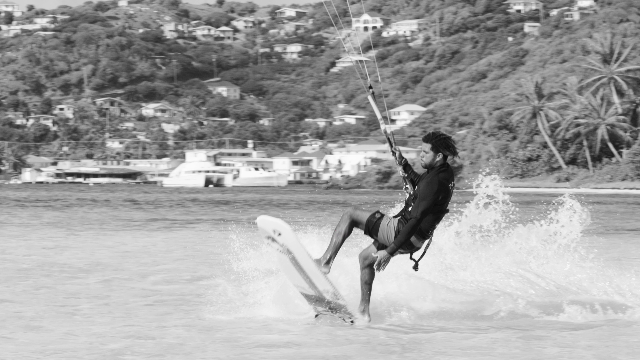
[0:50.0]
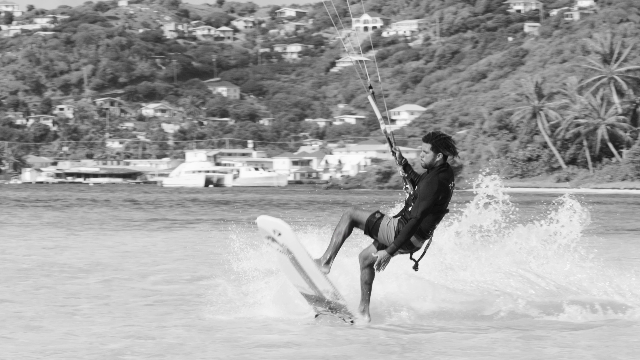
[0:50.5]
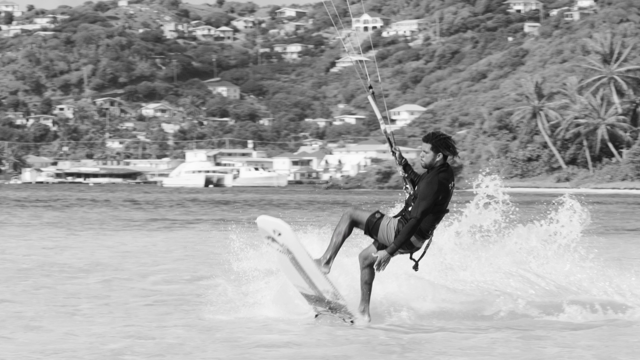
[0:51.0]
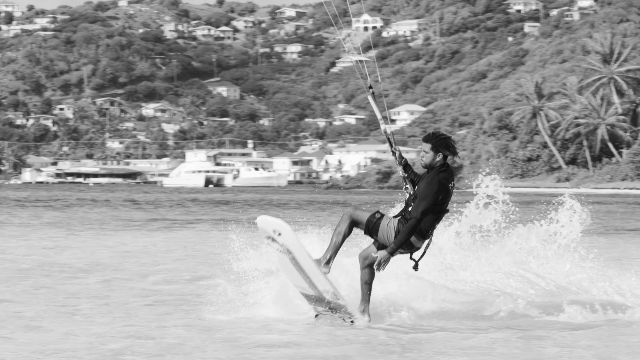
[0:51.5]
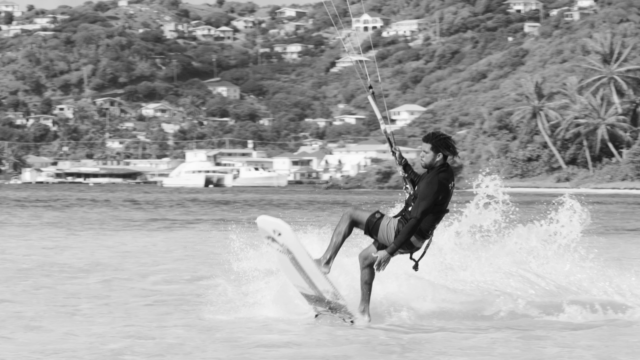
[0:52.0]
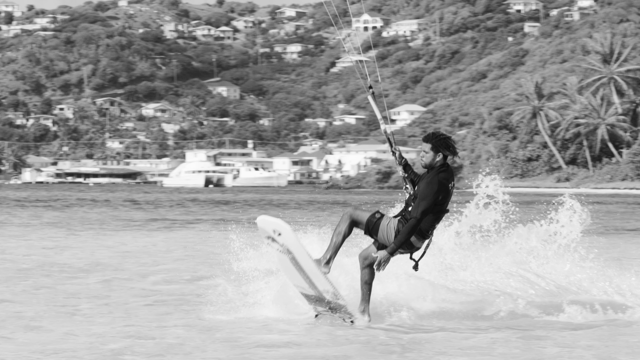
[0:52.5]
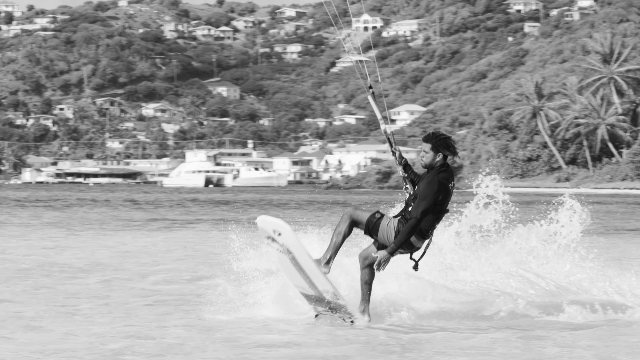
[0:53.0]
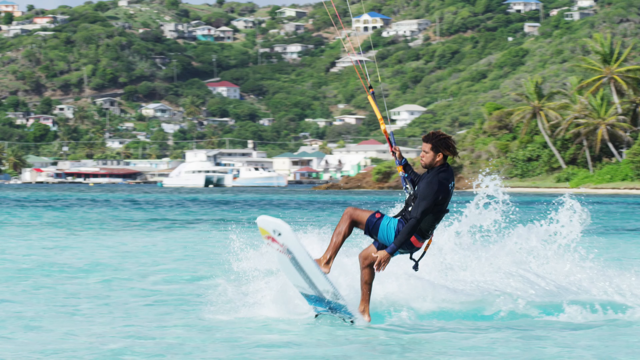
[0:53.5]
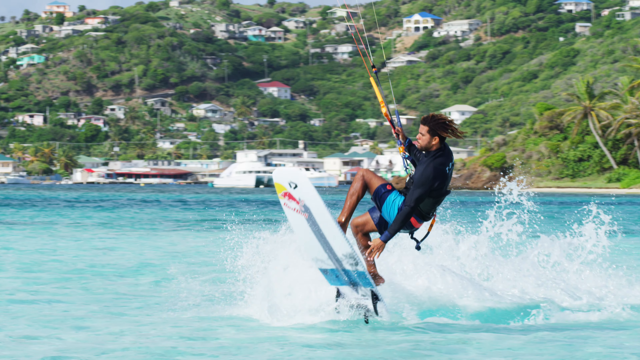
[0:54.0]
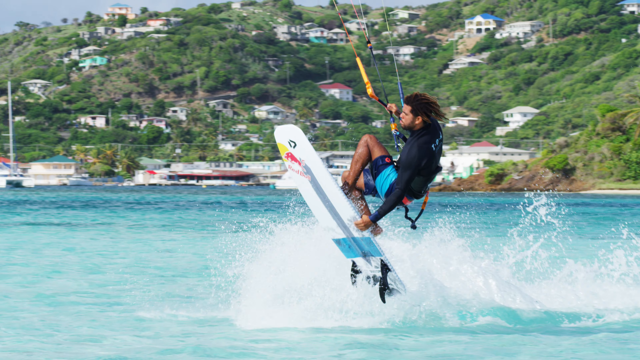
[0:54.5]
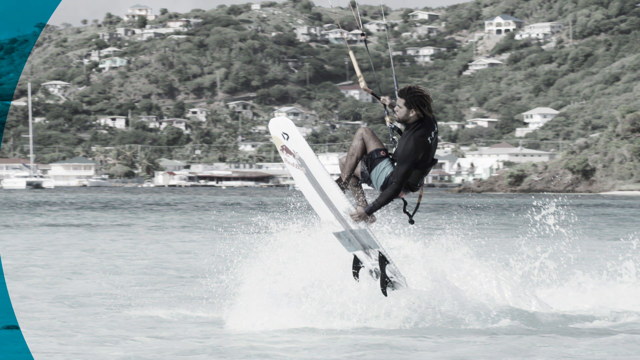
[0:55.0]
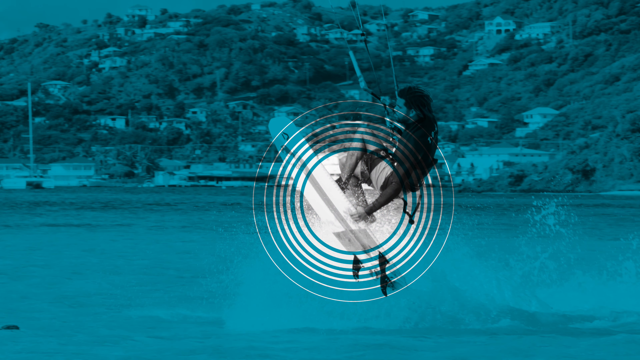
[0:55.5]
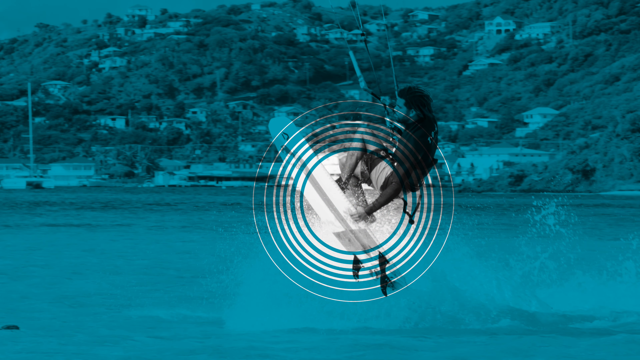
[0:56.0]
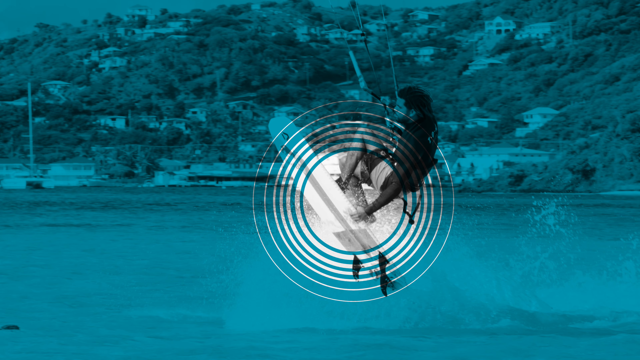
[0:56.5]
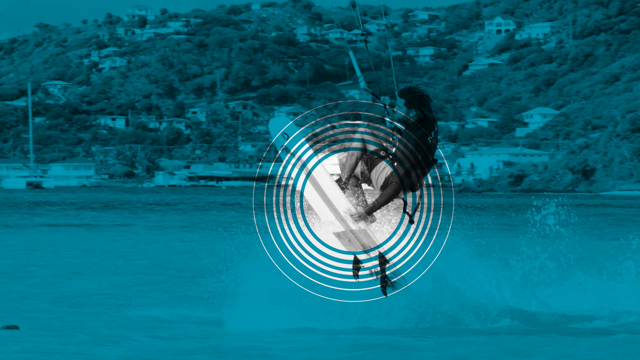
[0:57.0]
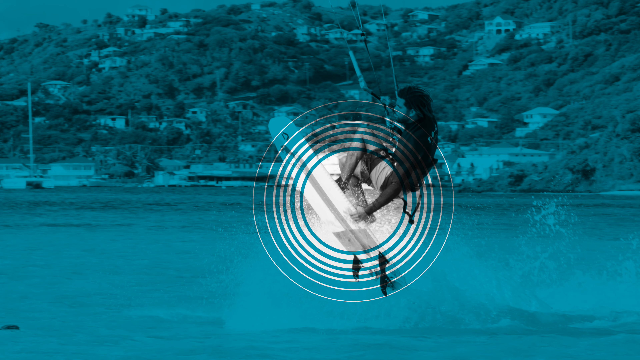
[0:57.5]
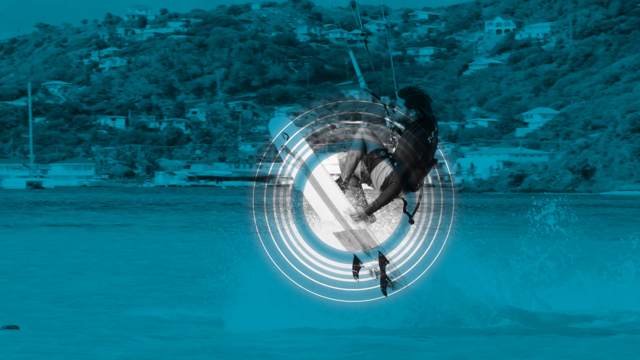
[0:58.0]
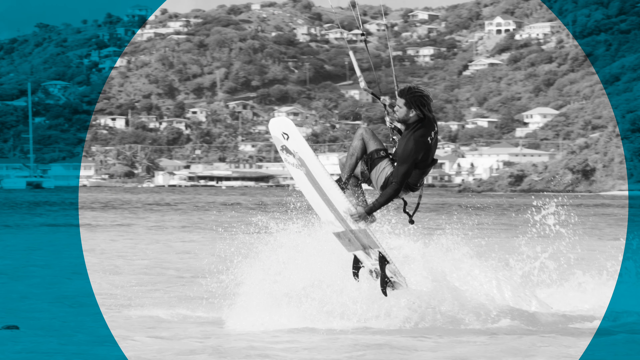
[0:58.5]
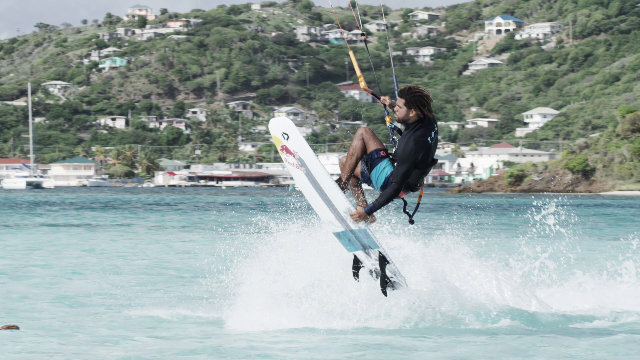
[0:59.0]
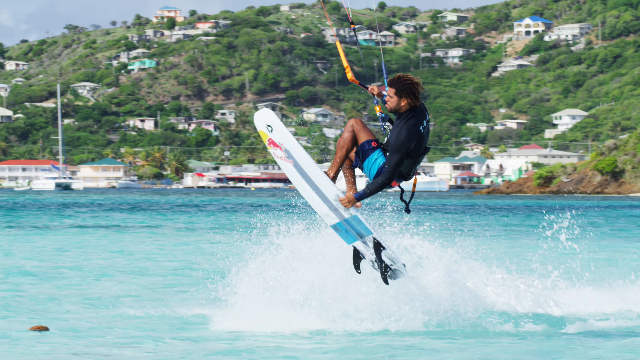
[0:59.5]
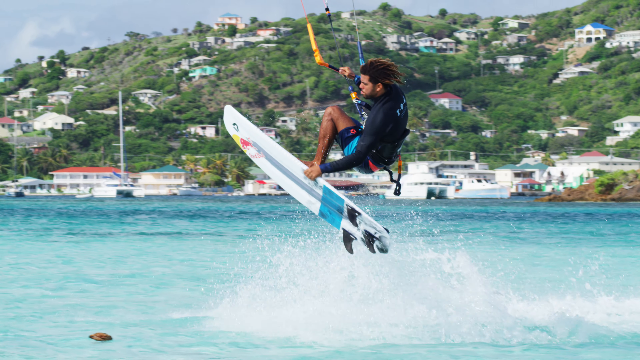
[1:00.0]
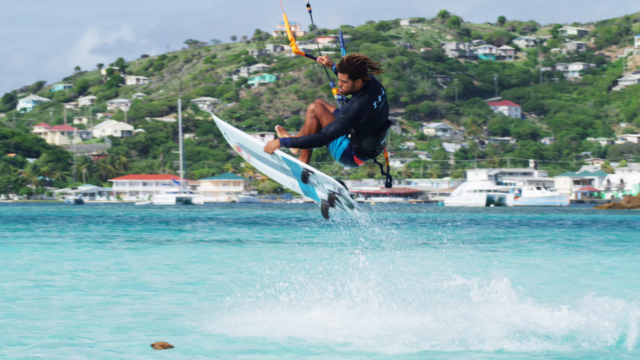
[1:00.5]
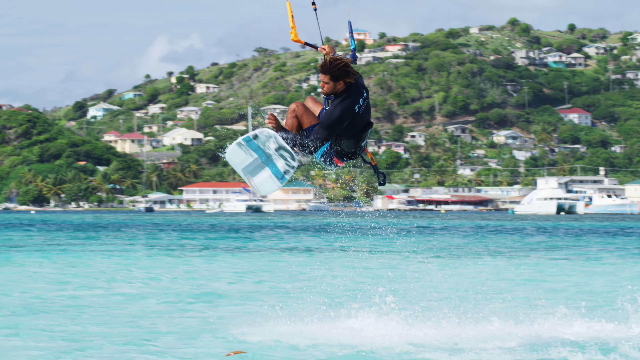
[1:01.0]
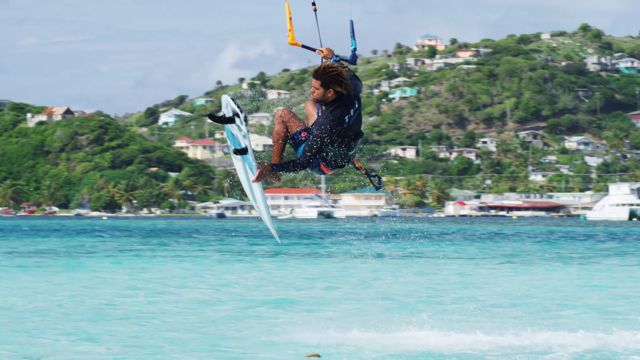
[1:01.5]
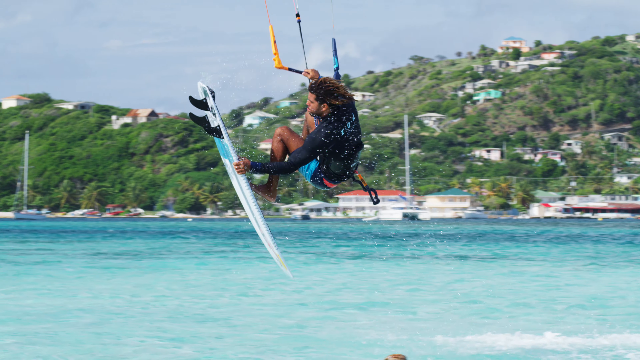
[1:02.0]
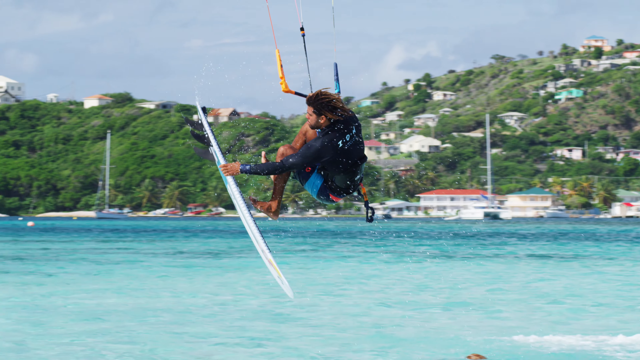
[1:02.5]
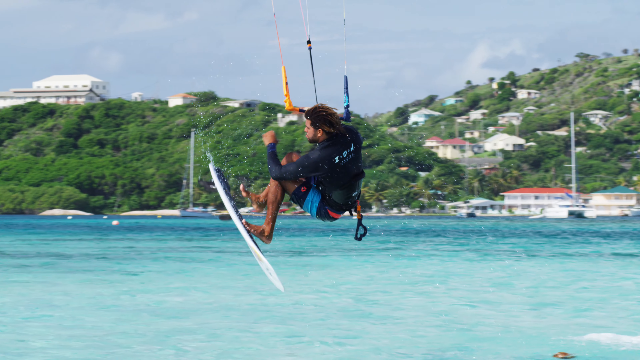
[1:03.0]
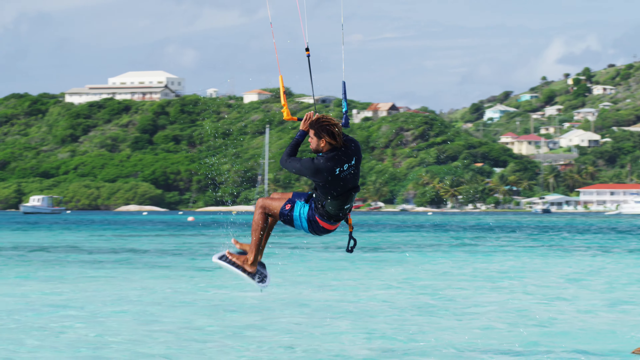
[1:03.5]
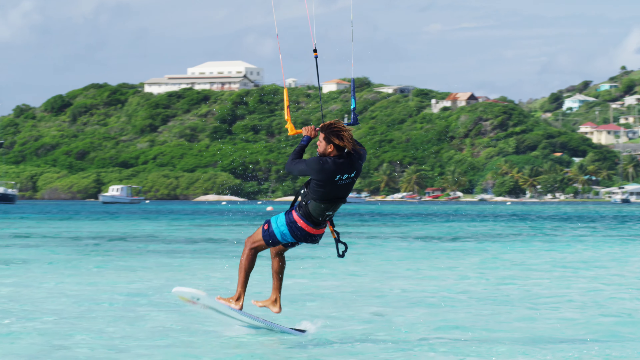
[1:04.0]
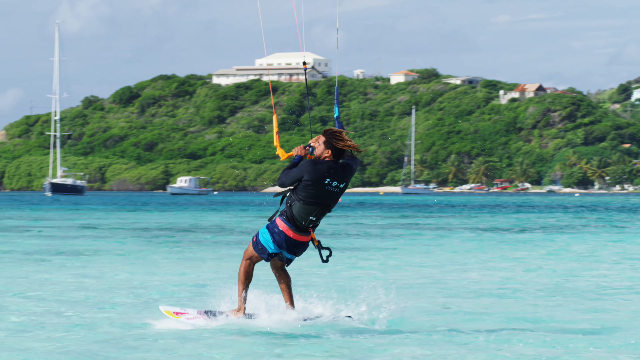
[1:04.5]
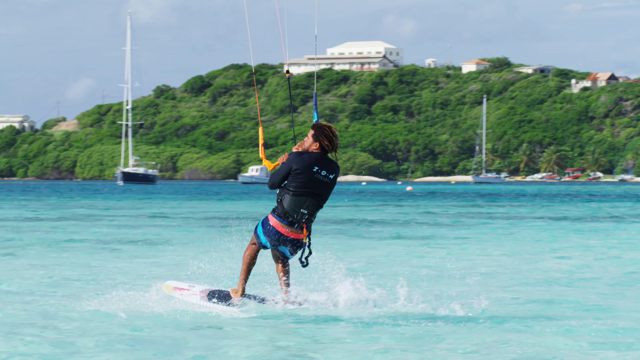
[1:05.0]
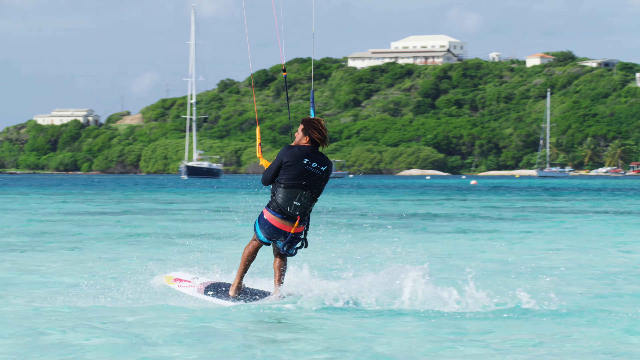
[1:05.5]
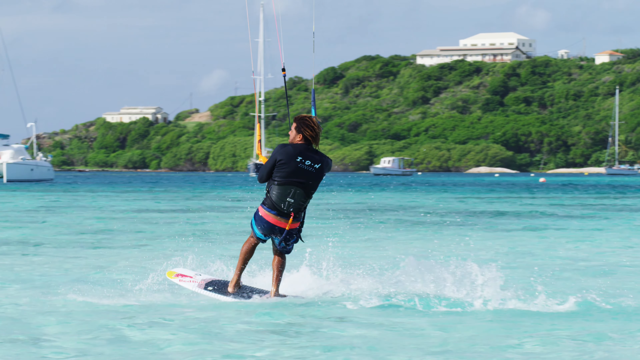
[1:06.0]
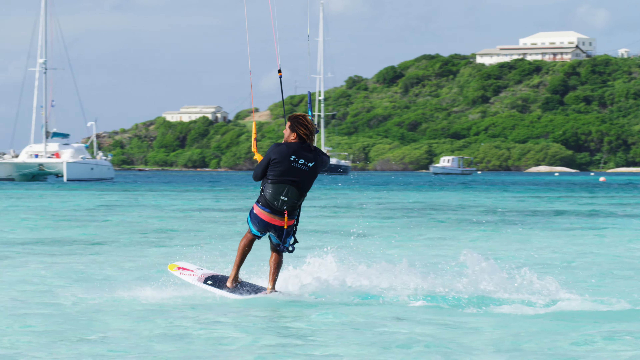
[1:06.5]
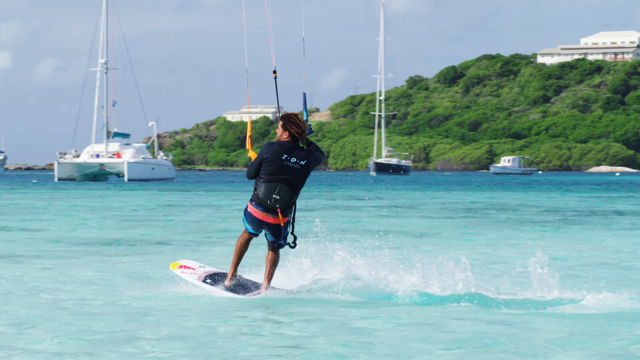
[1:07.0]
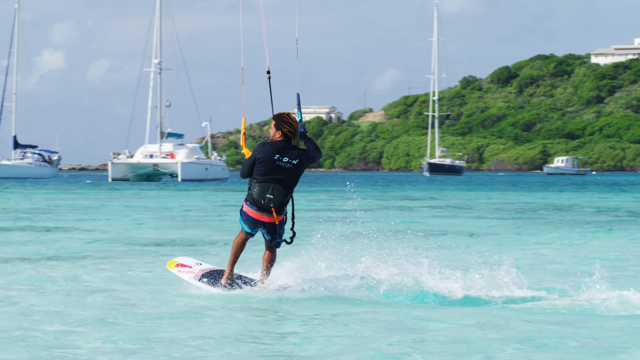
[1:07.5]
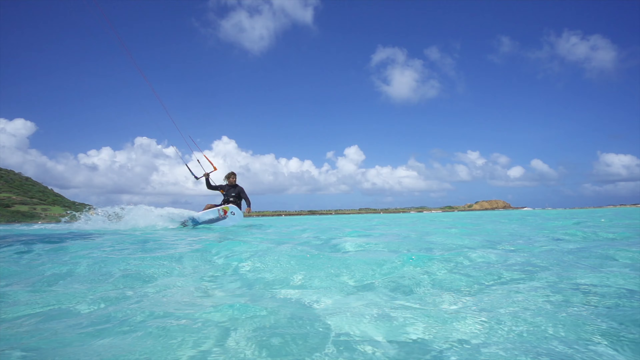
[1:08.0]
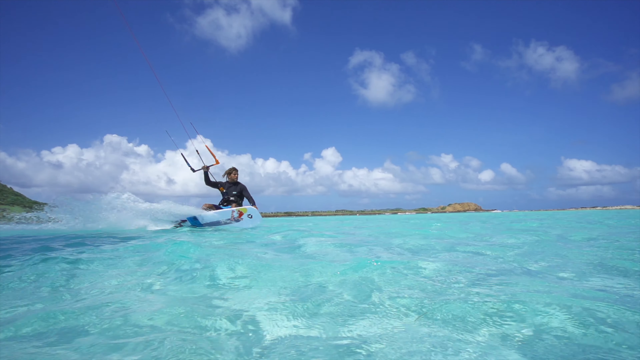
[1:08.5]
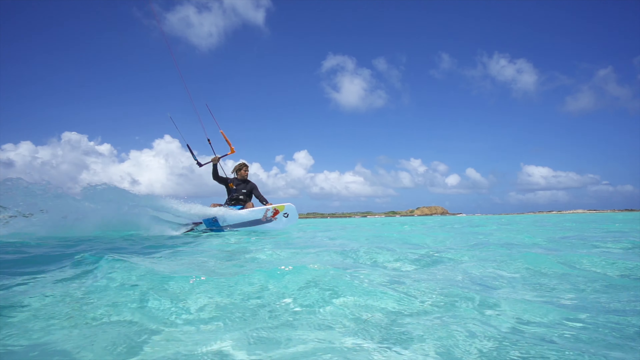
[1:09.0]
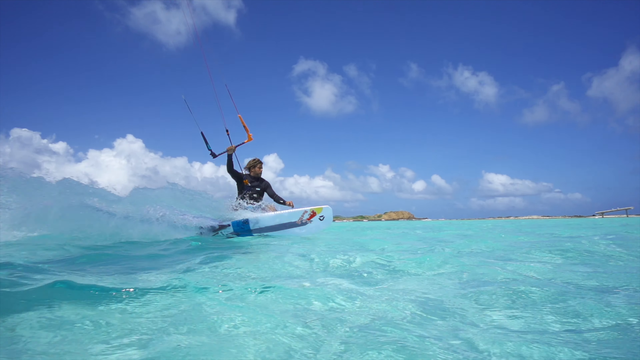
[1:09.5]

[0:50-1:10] In black and white, the man is on the board, which is tilted upwards, with the mountains behind him. After a few seconds the scene changes to color. He holds the side of the board with one hand and the bar attached to the parachute with the other, and the board lifts up out of the water as he holds it. On the bottom of the board are two black attachments at the back that almost look like shark fins. The scene then changes to a light blue background with something like a bullseye circle highlighting the center of the board, where the man is holding it. The view zooms back out as he turns the board completely around, then a full circle, then sideways, and puts his feet back on the board as it goes down into the water. He then glides across the water on the board as waves kick up along its side.